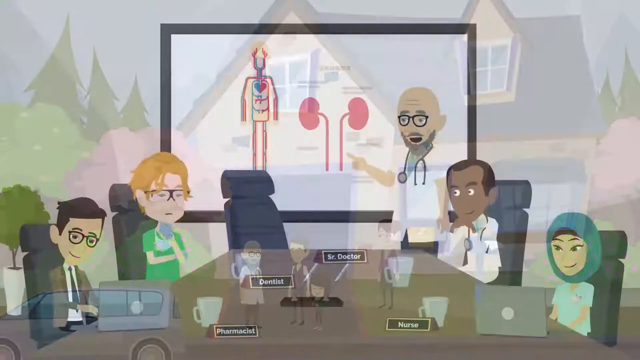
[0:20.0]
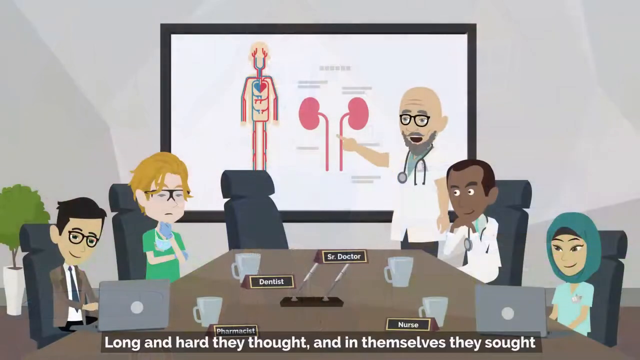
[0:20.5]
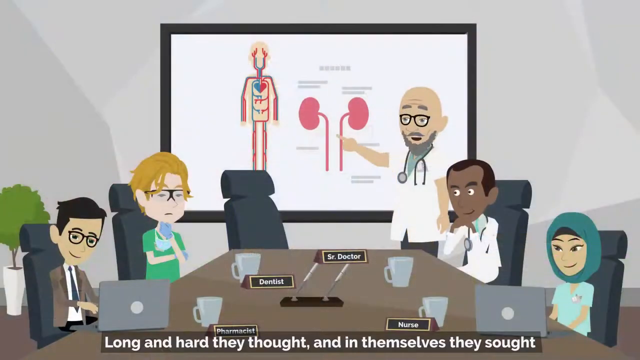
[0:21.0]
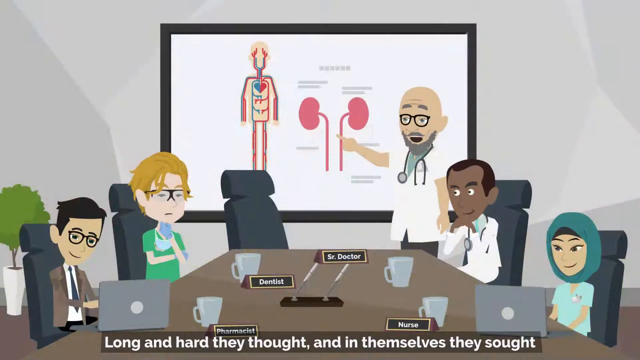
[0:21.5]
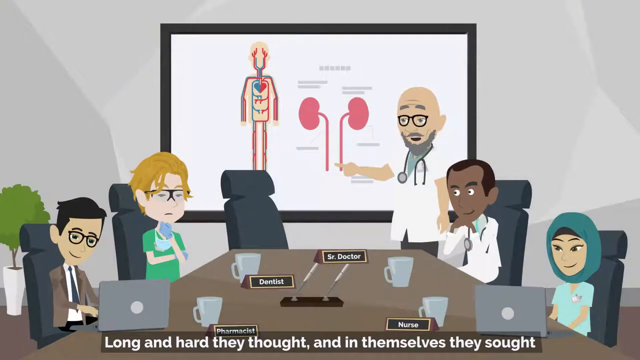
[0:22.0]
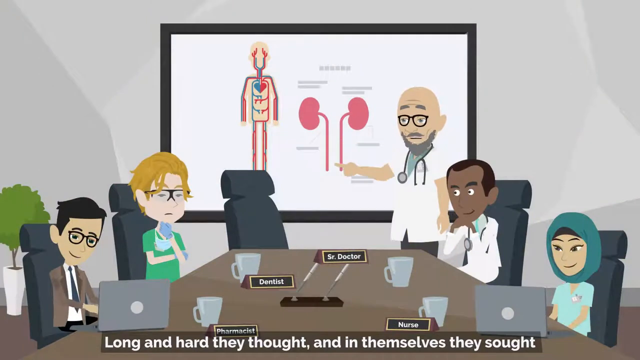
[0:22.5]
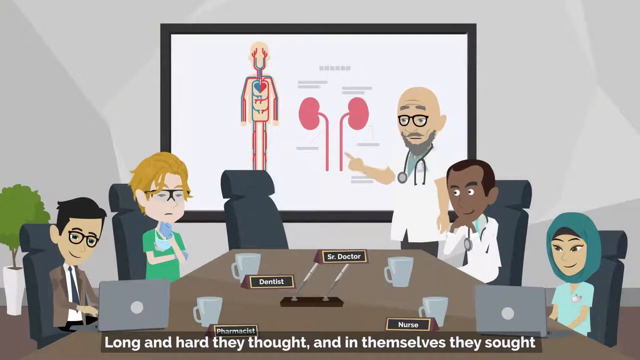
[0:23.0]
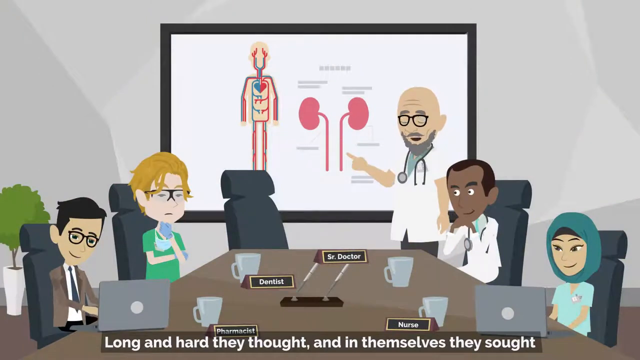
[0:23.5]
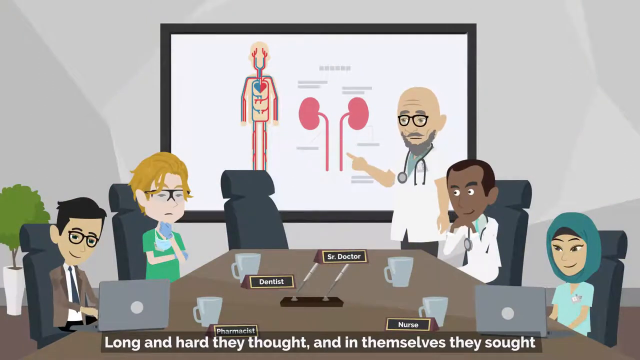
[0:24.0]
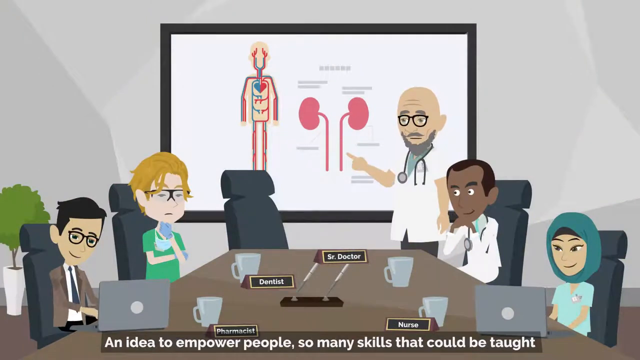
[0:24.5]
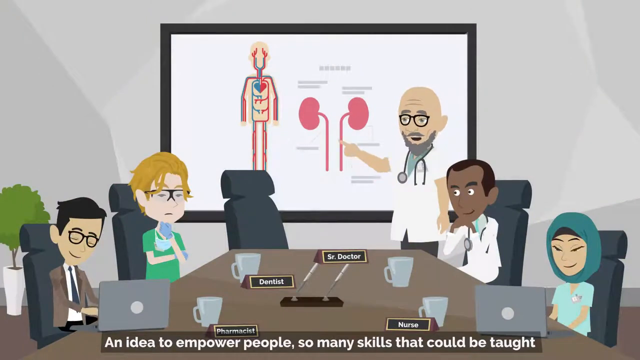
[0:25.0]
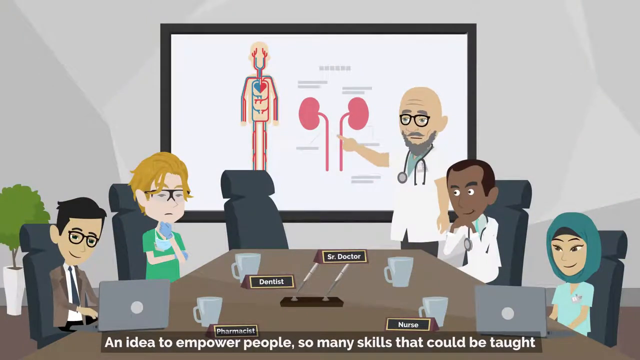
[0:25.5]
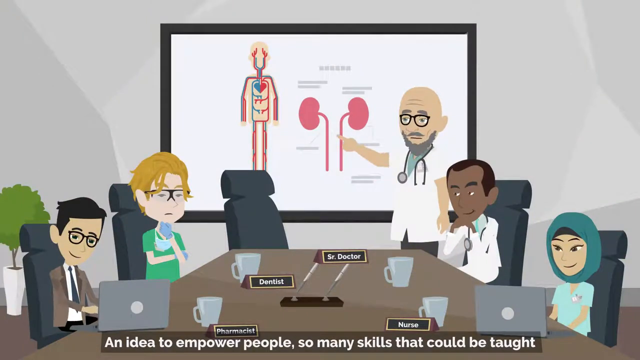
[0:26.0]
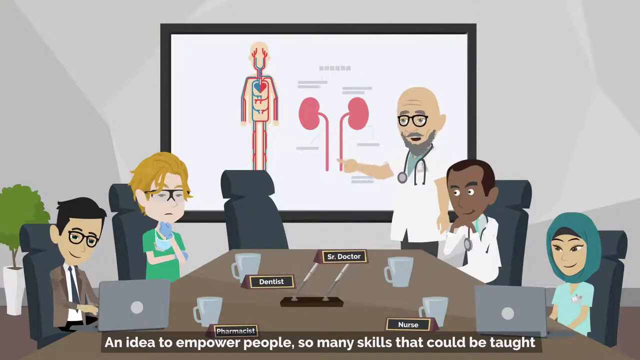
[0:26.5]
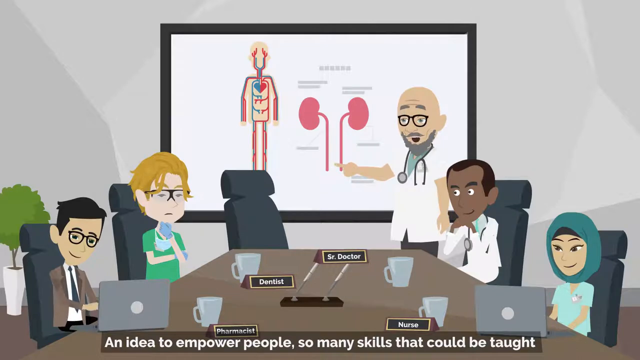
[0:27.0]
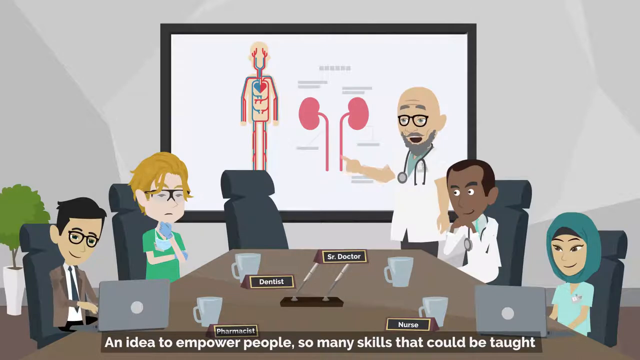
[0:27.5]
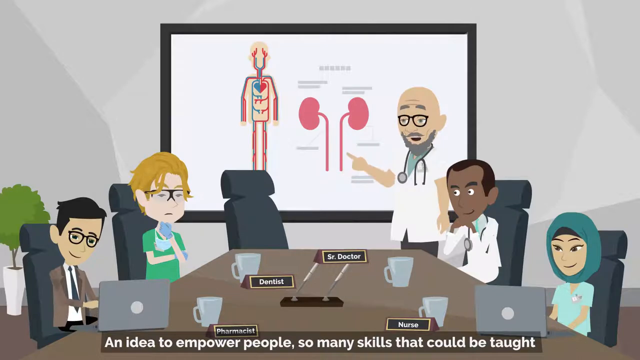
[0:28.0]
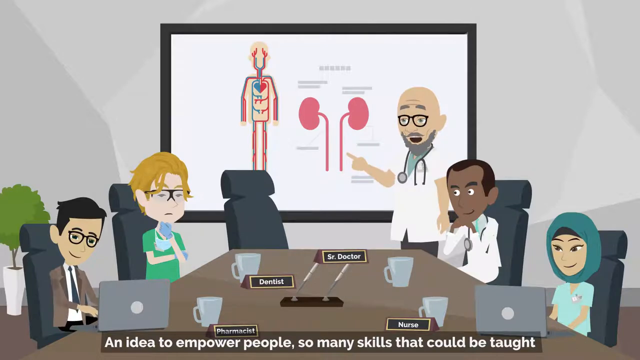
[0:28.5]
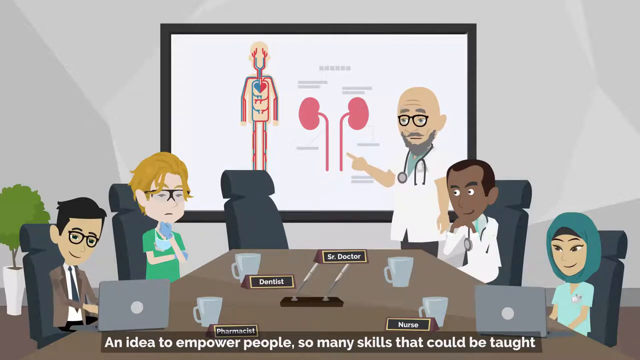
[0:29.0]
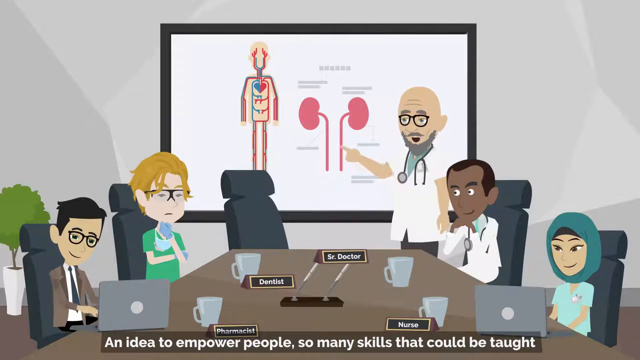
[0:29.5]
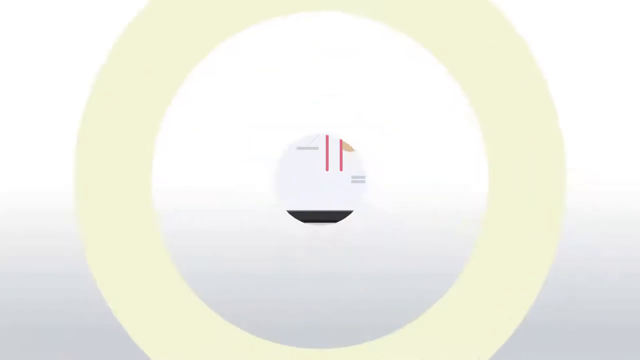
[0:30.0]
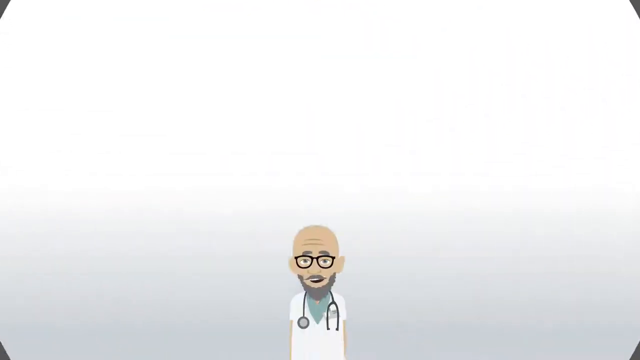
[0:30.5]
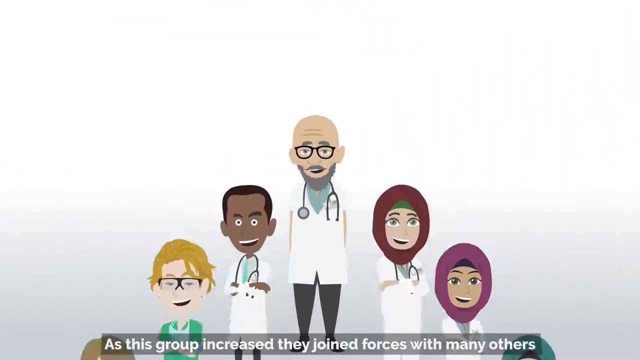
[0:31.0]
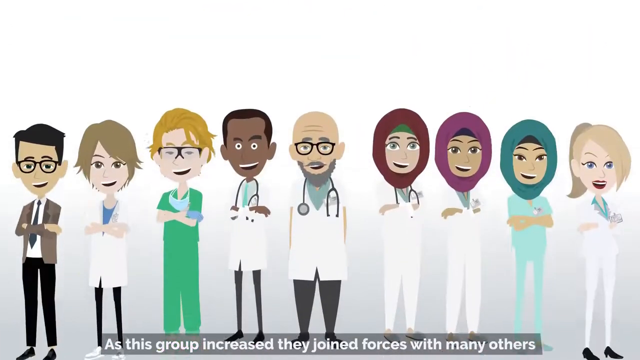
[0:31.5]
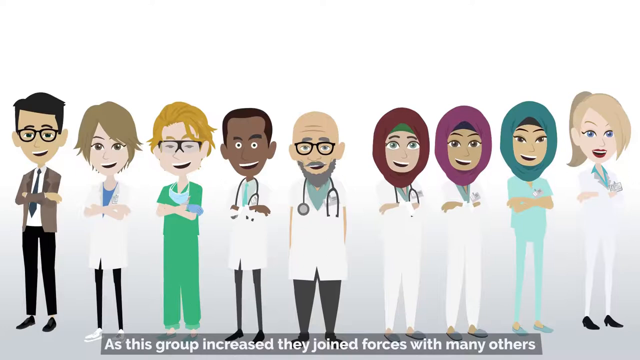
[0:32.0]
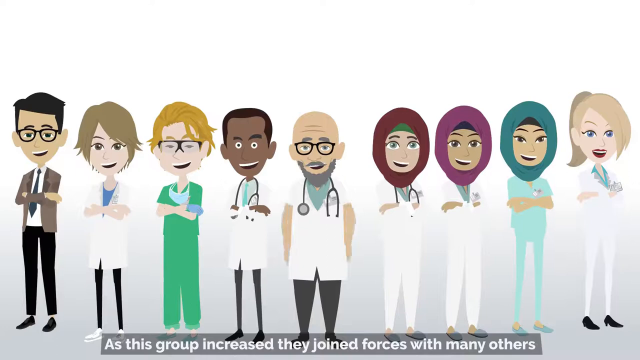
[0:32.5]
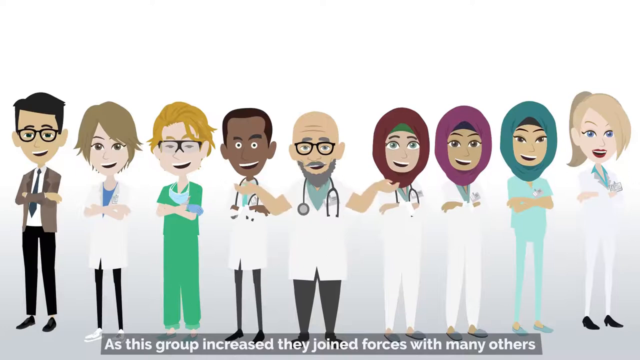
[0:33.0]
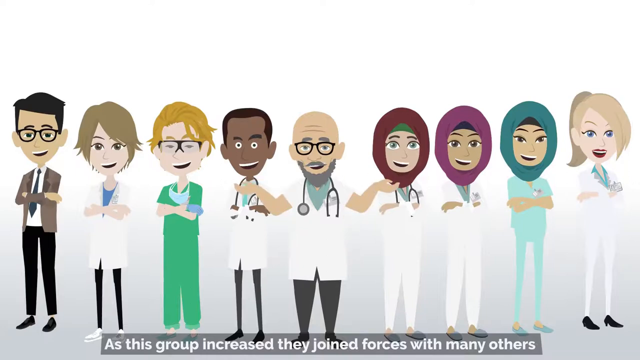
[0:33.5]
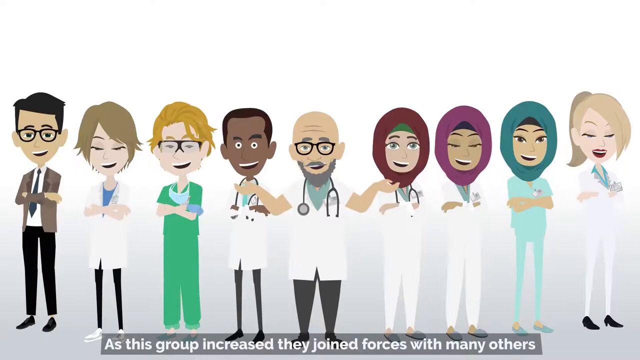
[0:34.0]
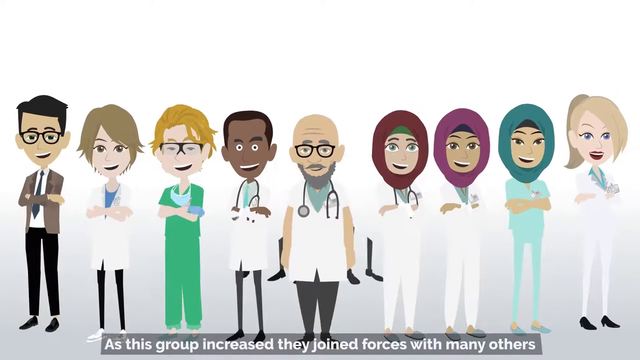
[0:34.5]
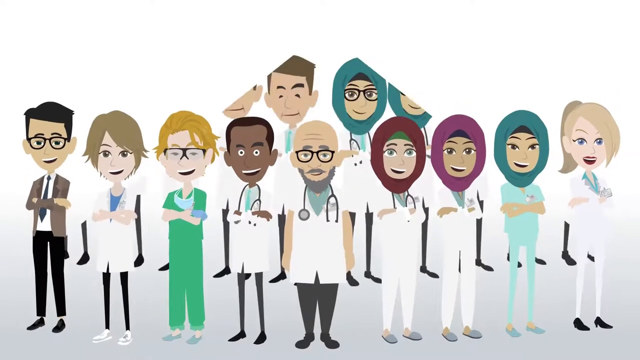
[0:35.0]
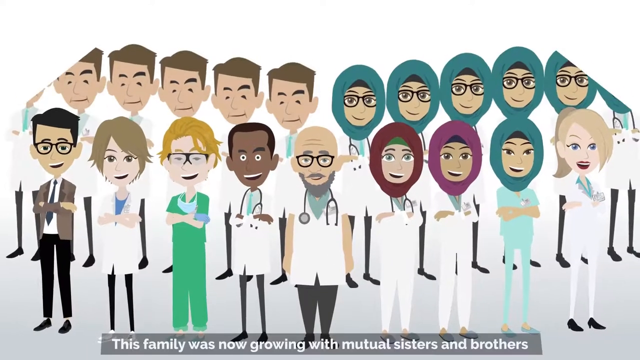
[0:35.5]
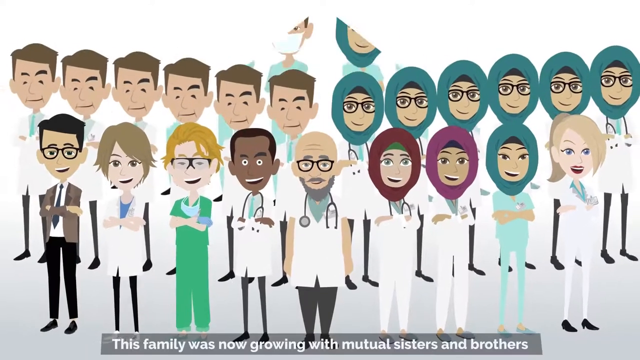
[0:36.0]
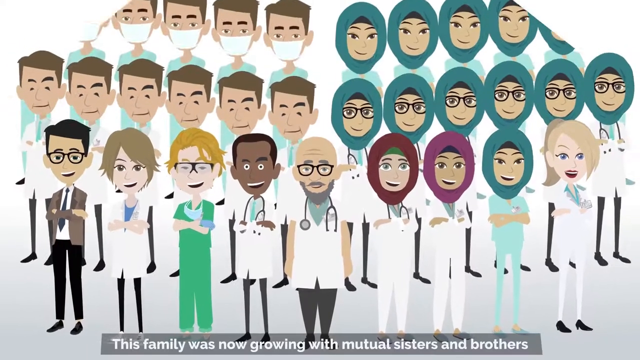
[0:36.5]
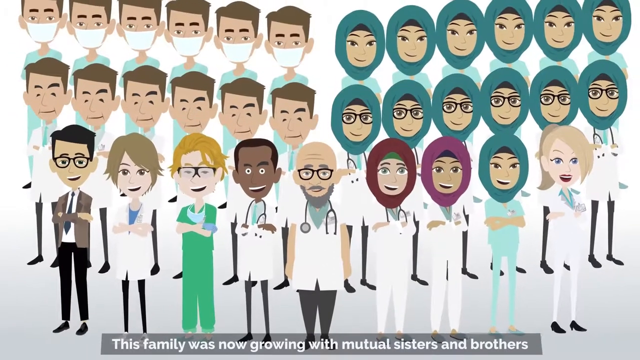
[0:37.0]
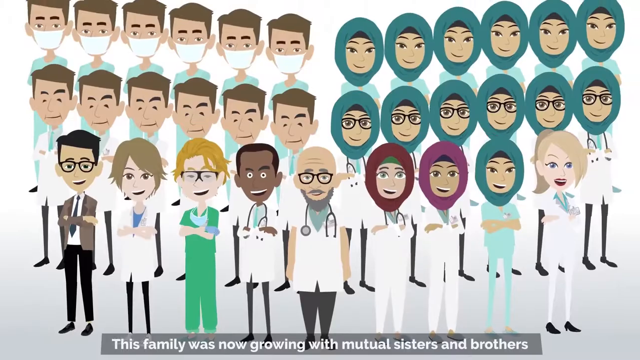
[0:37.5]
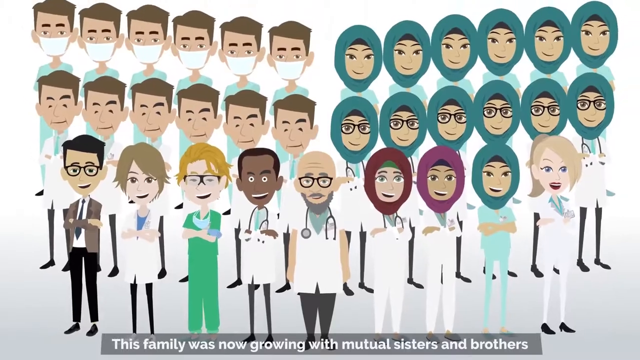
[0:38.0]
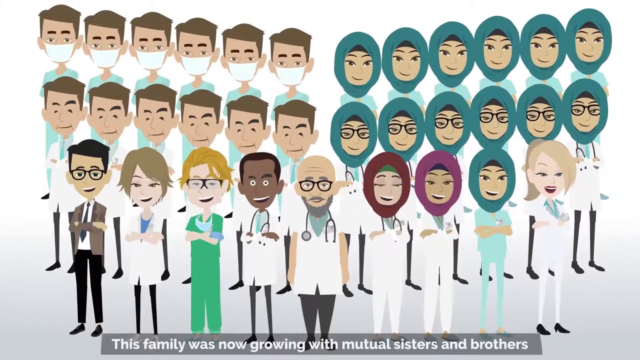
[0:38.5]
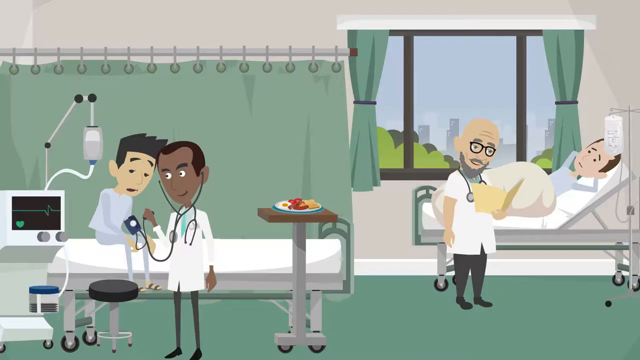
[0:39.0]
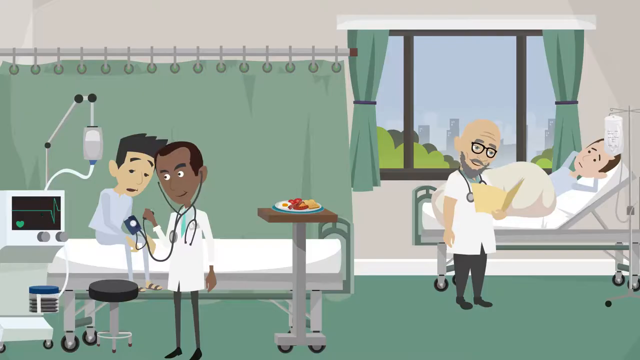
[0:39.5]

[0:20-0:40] The bearded medical professional stands in front of a whiteboard on which a pair of pink kidneys is prominent, speaking to a conference room of four physicians. In the lower left is a white male; next to him is another white male in a smock. To the right of the table is an African American male with a stethoscope, and in the bottom right is a woman wearing a green scarf over her head. The speaking man points to the kidneys as he talks, and a name tent identifies him as a senior doctor. The screen then changes to nine physicians facing the camera; from left to right they are male, female, male, male, male, female, female, female, female, showing approximately equal numbers of men and women. The bearded doctor stands in the center and at one point raises his arms to his shoulders to emphasize a point. Men and women doctors then appear in rows behind them, in generally equal numbers. Some wear masks and some wear eyeglasses. They are arranged in a stadium-style seating arrangement, although they are standing, against a white background.